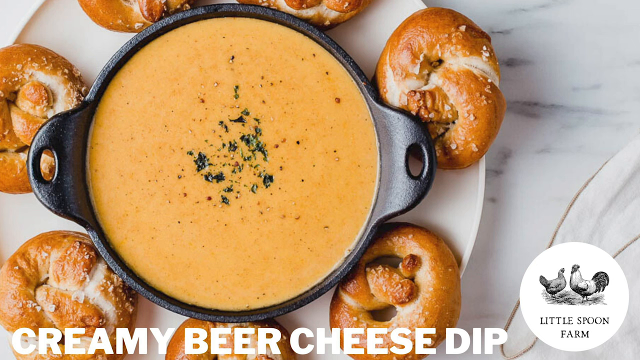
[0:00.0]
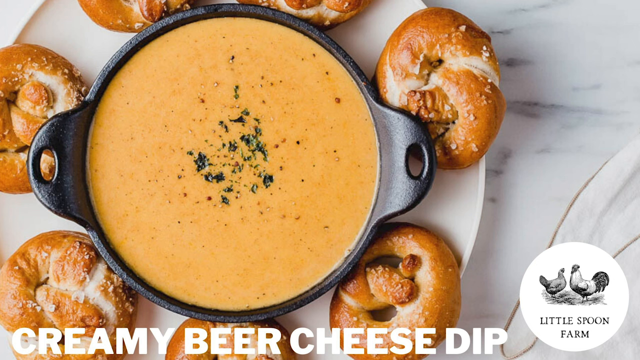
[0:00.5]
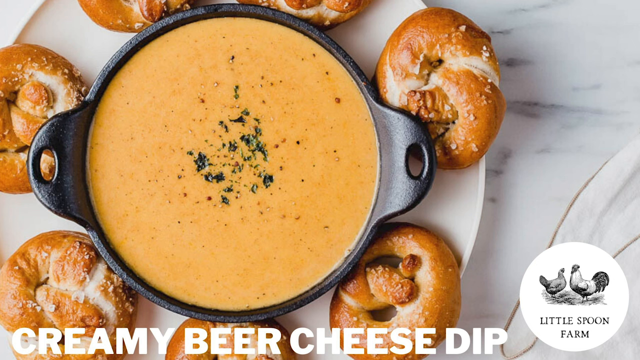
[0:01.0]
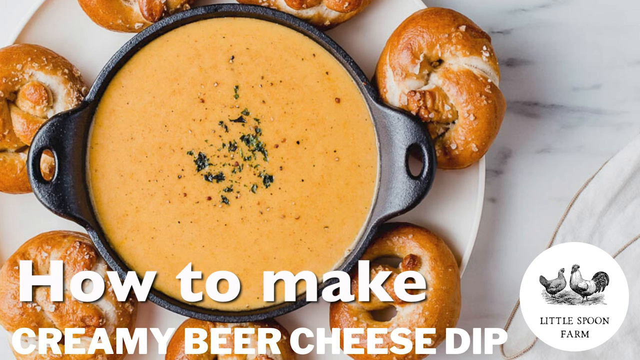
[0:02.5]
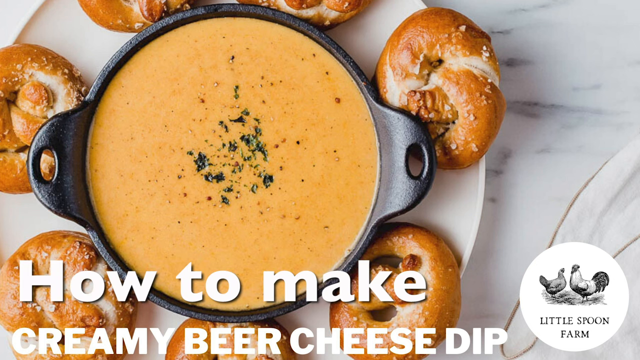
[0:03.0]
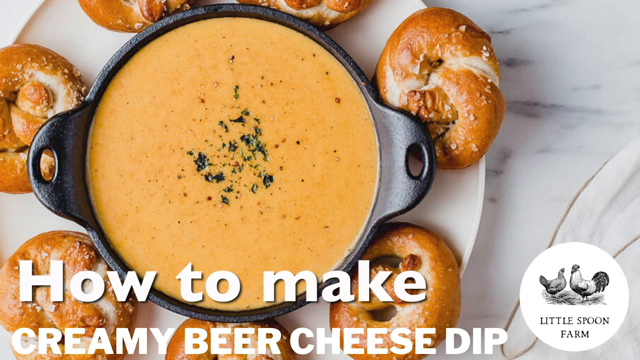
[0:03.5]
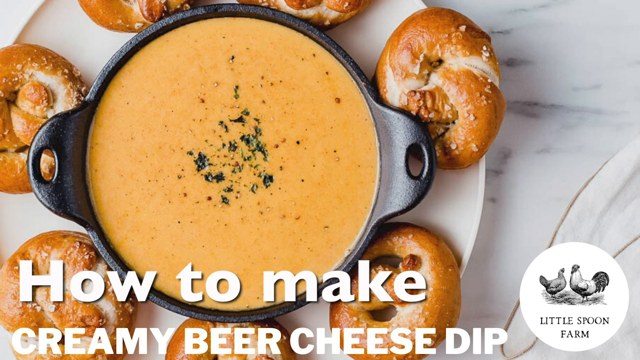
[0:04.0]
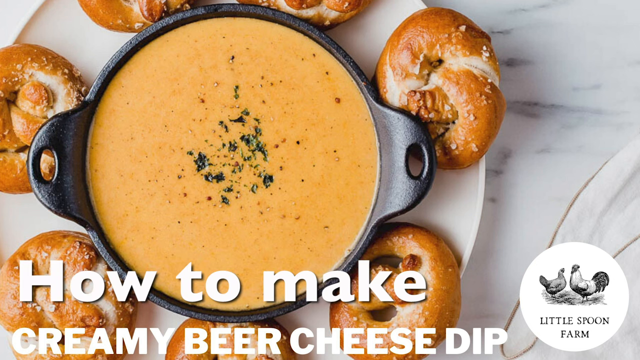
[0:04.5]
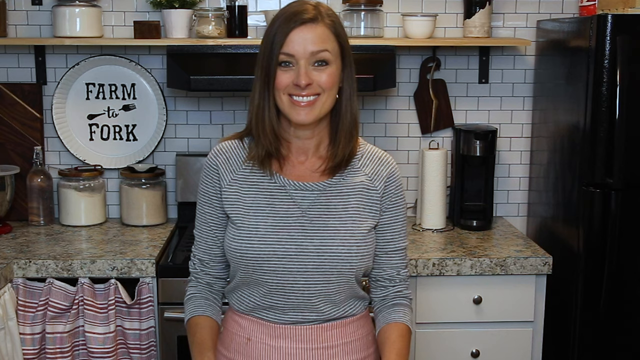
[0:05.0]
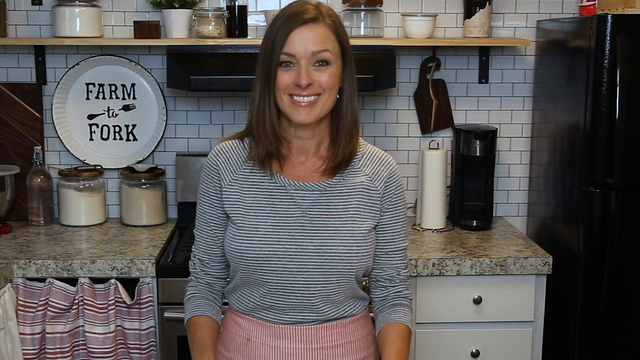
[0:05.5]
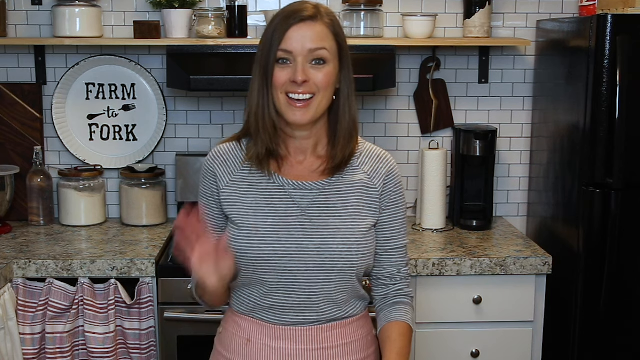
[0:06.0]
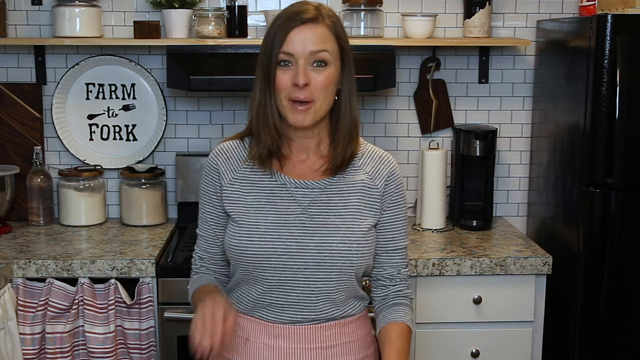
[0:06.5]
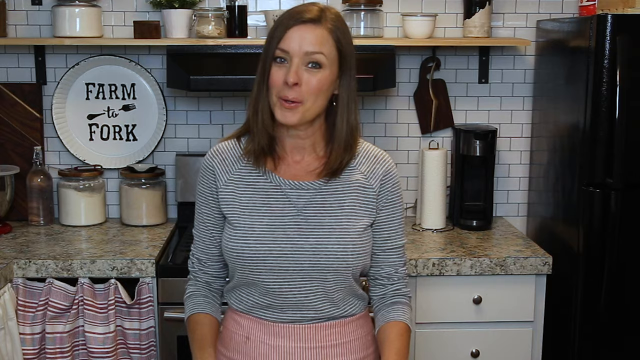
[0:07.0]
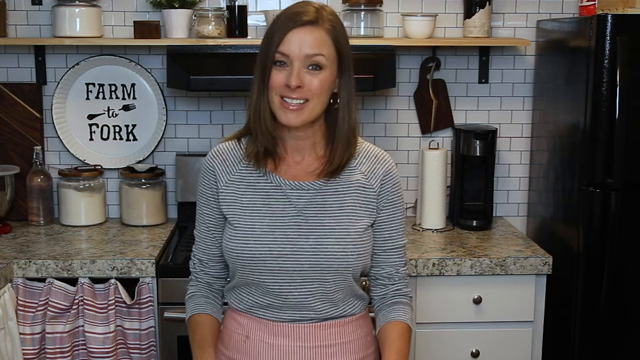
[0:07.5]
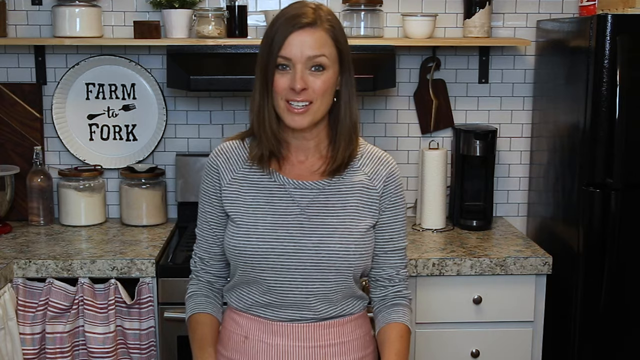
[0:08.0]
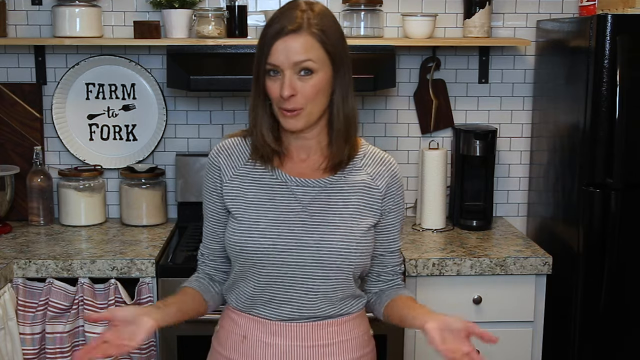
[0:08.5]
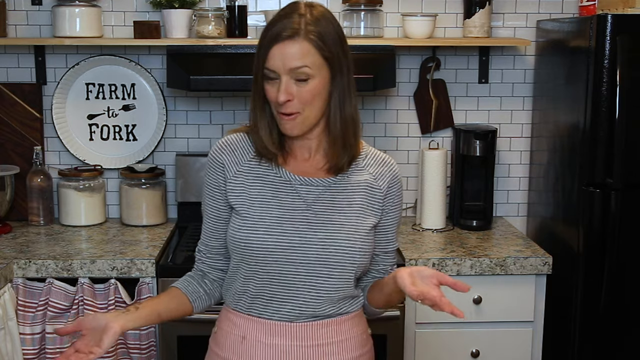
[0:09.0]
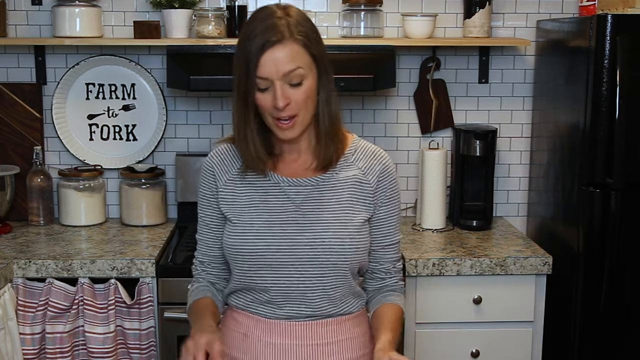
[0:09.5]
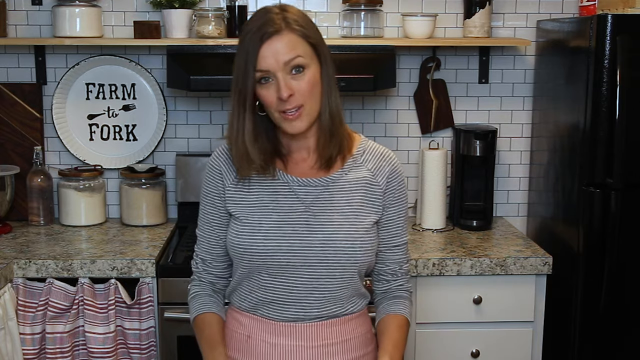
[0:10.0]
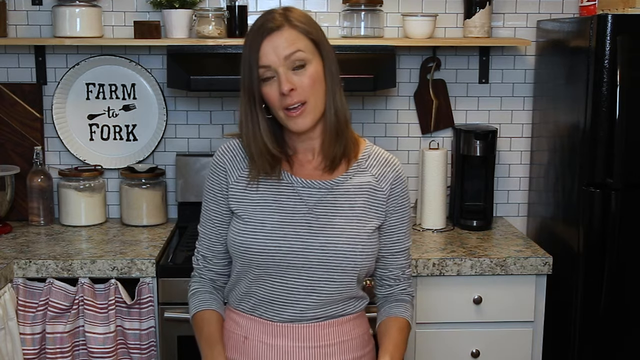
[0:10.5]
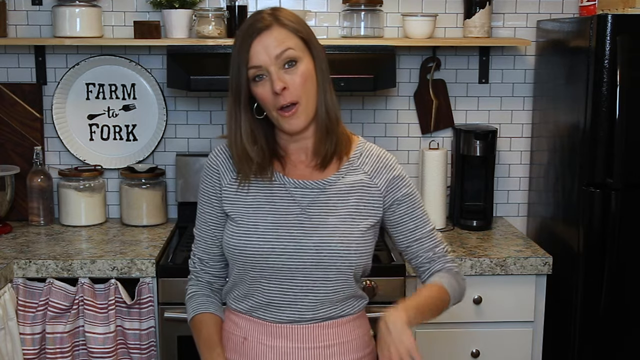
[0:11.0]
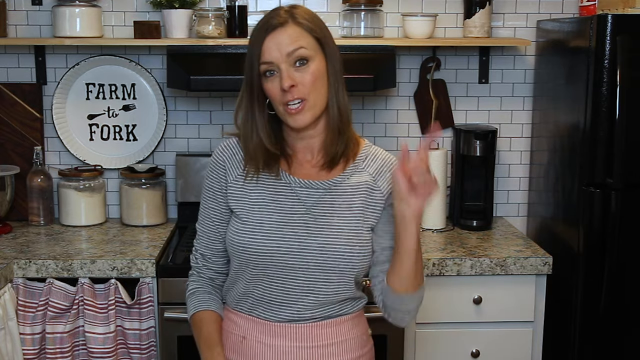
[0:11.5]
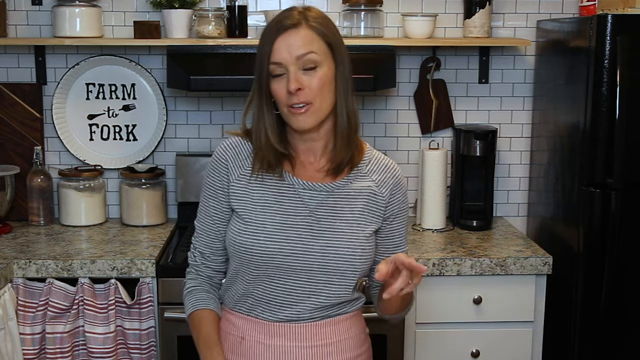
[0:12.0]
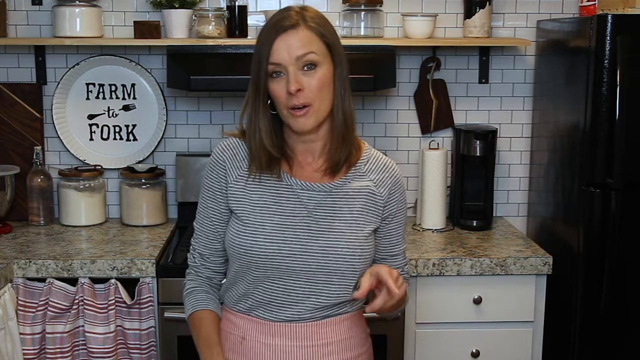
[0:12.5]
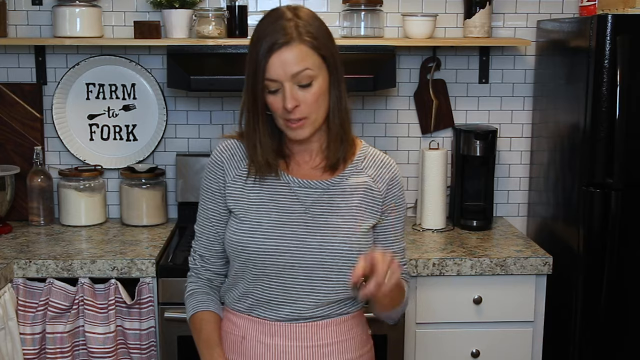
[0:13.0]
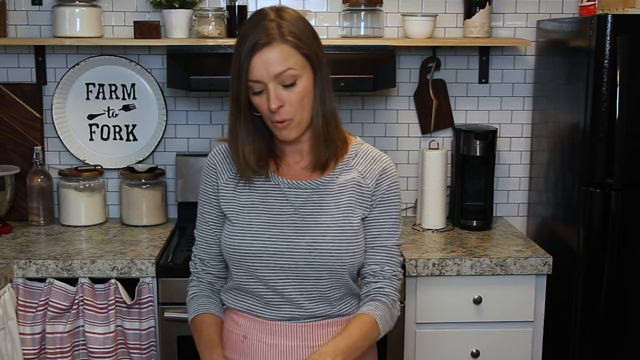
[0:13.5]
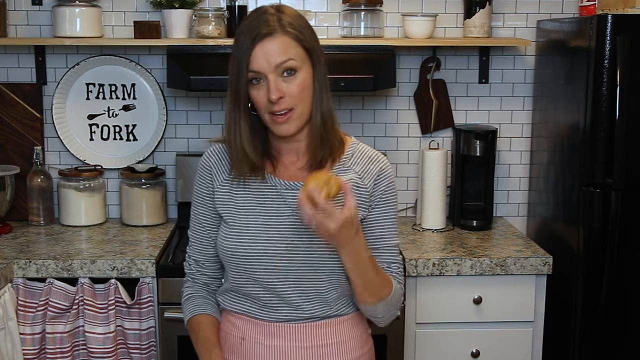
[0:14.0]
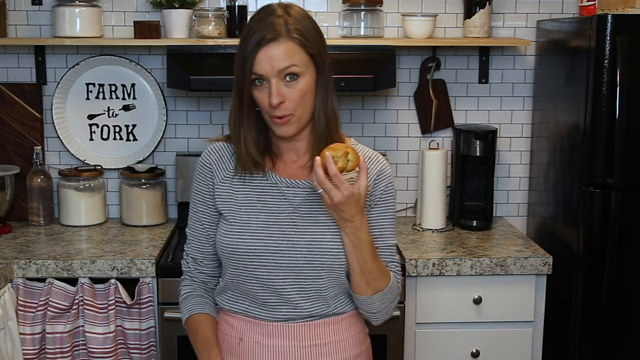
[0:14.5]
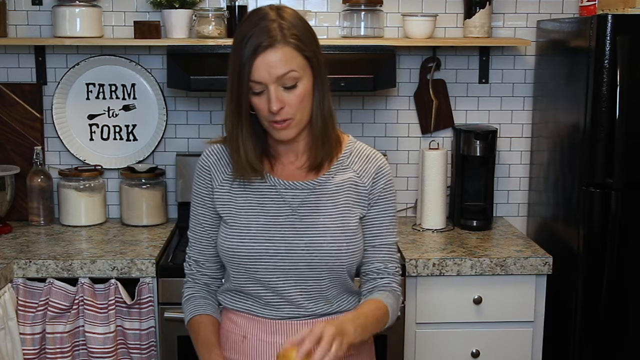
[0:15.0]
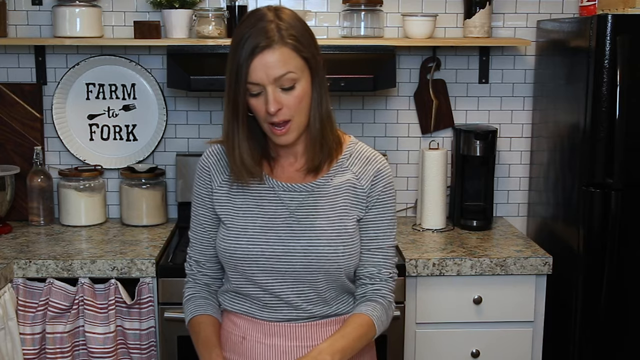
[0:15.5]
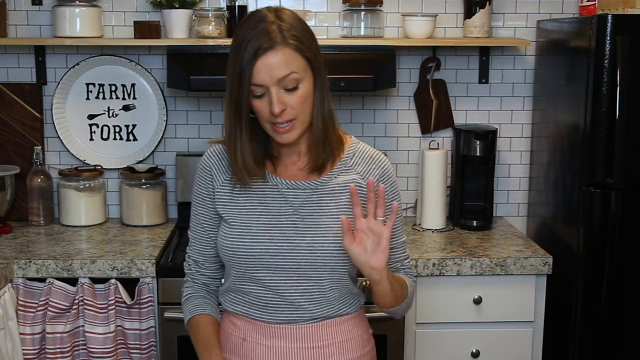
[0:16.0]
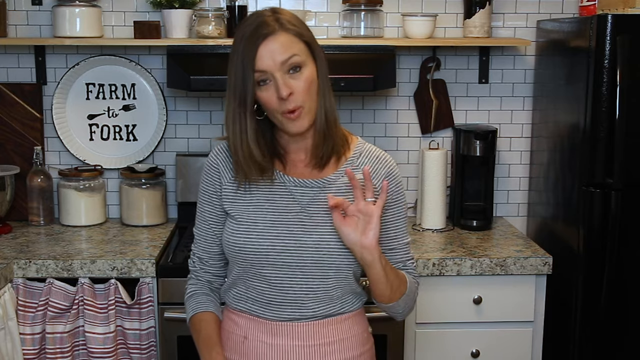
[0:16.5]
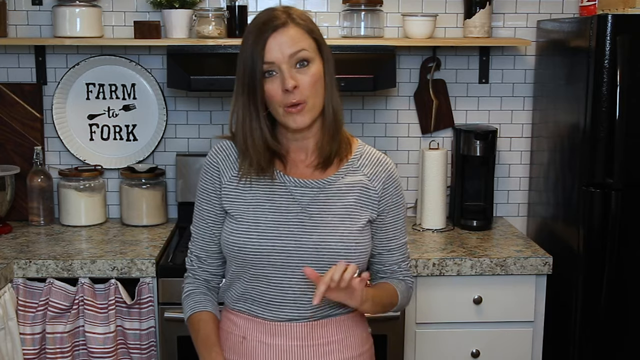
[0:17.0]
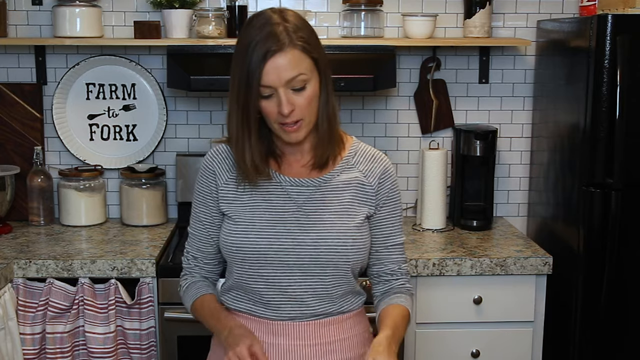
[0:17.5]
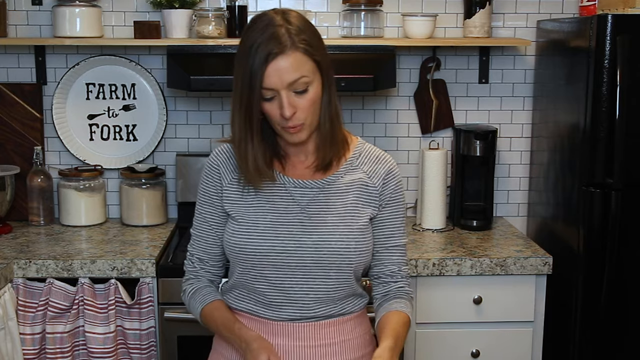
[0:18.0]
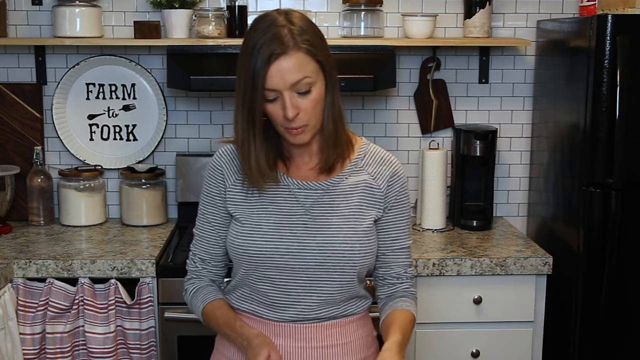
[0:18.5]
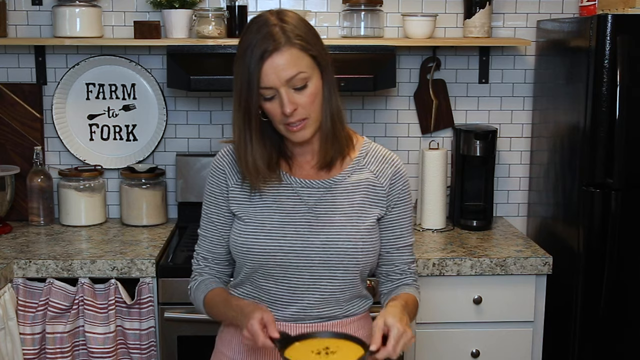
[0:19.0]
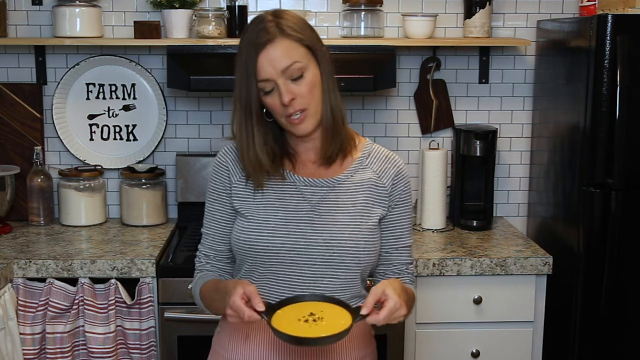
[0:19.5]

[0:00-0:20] The video is about making a creamy beer cheese dip. It opens with a woman in her kitchen. A cloth is on the counter, and there is a big decorative plate with "farm to fork" written on it. There is also a black fridge, containers holding salts and powders, and a colorless bottle that appears to contain water. The woman looks to be in her 40s to 50s. She has long brown hair and wears earrings, a ring on her ring finger, a blue and white striped shirt, and a pink and white striped skirt.